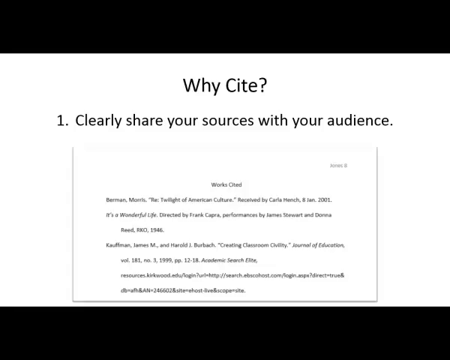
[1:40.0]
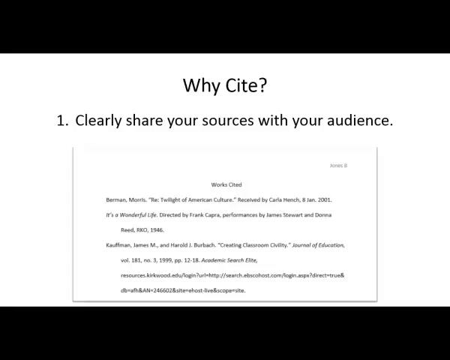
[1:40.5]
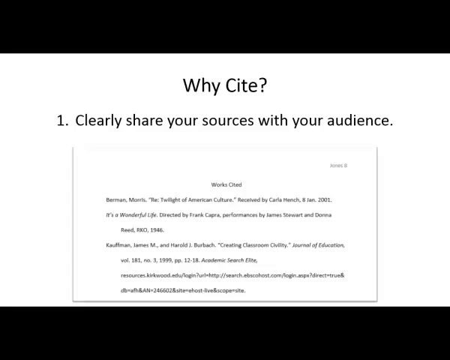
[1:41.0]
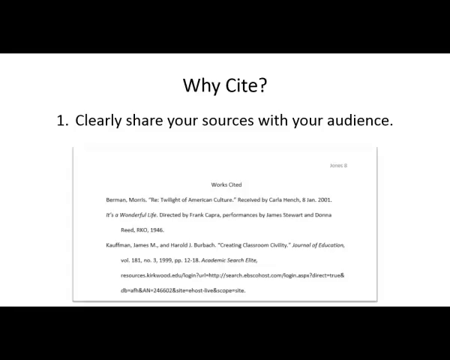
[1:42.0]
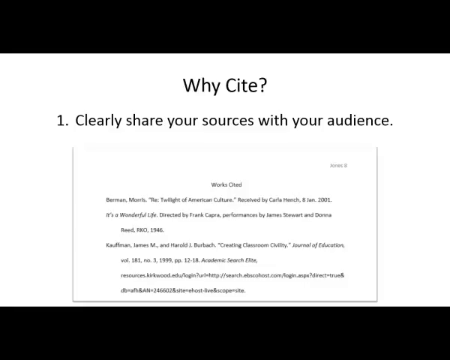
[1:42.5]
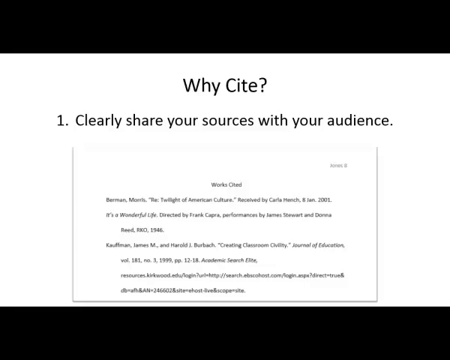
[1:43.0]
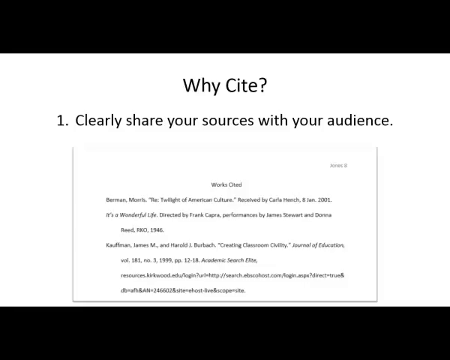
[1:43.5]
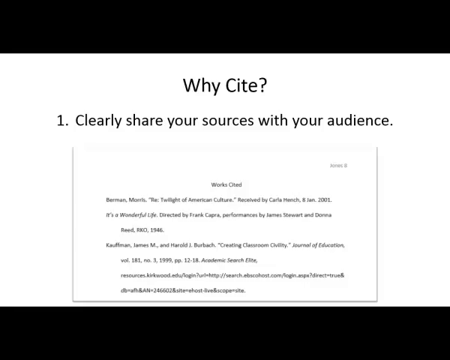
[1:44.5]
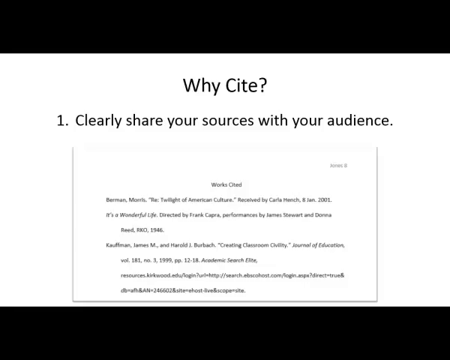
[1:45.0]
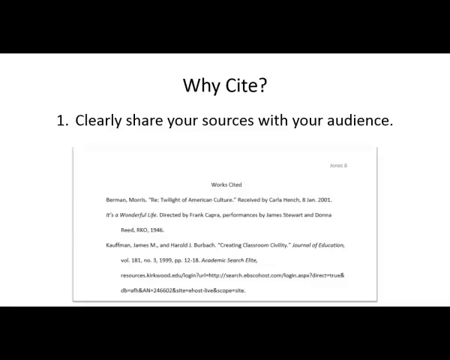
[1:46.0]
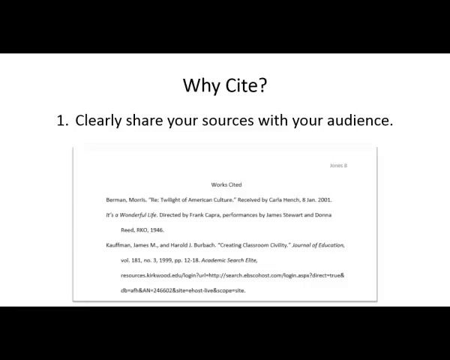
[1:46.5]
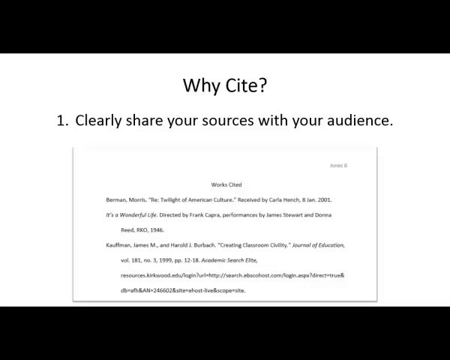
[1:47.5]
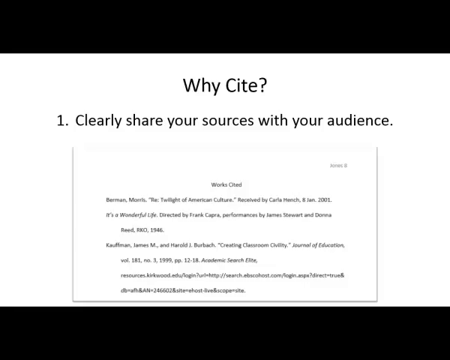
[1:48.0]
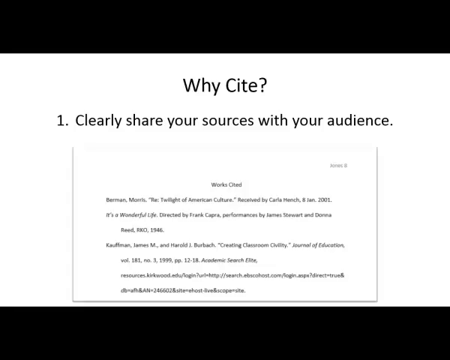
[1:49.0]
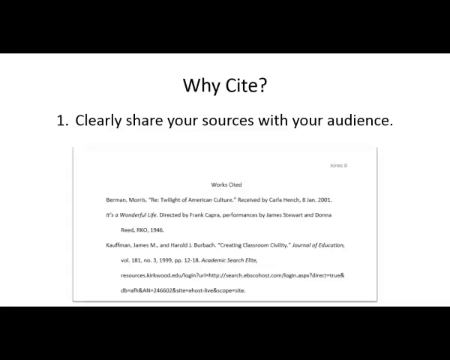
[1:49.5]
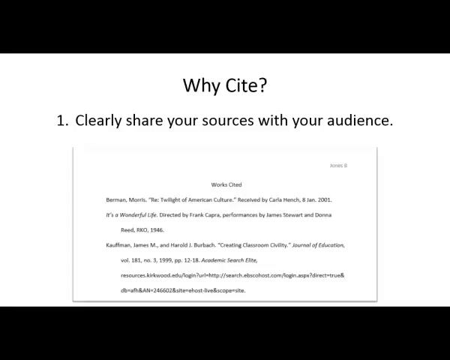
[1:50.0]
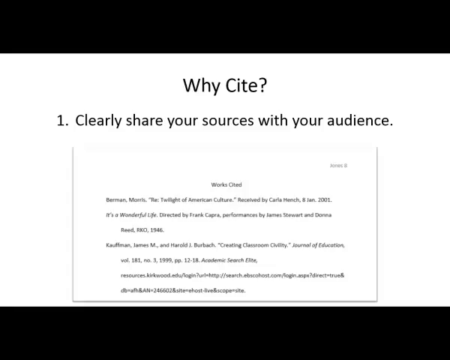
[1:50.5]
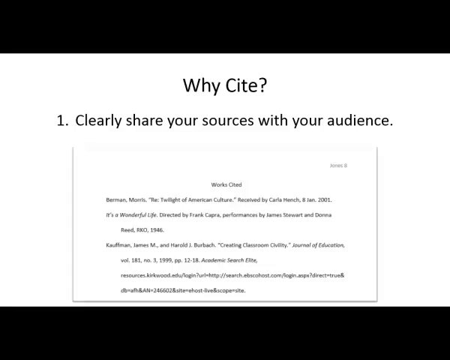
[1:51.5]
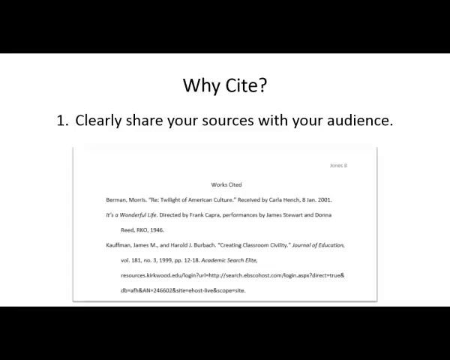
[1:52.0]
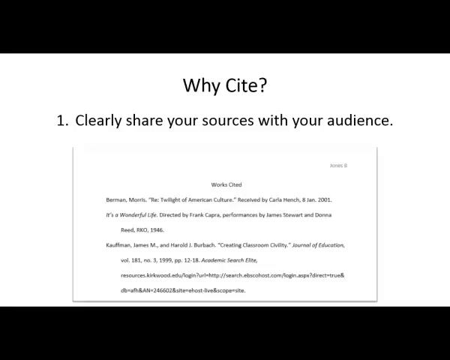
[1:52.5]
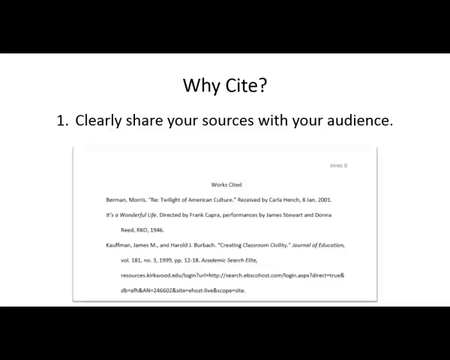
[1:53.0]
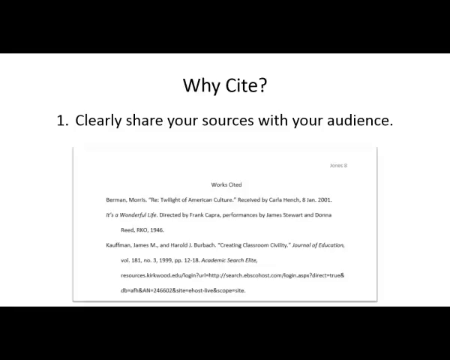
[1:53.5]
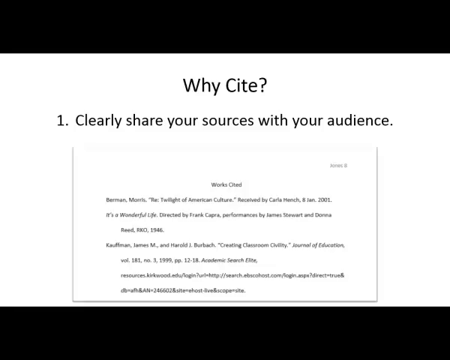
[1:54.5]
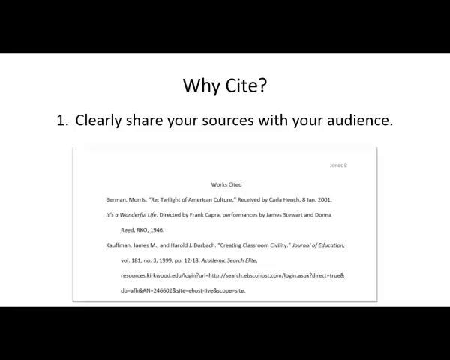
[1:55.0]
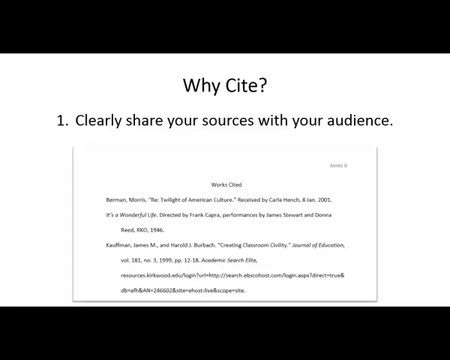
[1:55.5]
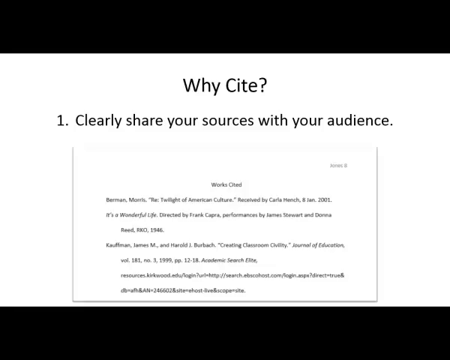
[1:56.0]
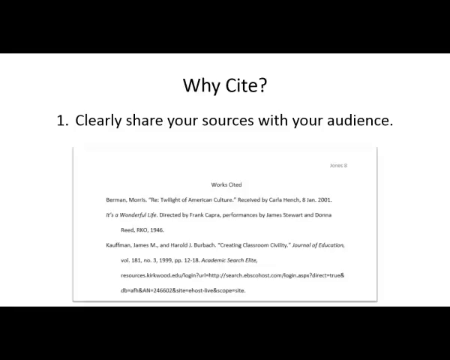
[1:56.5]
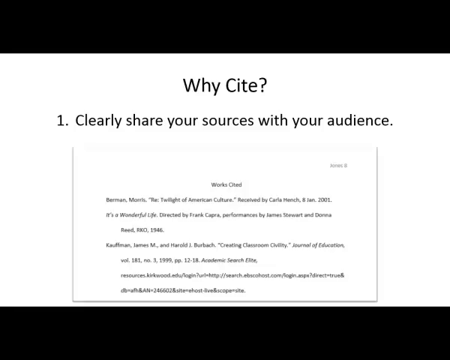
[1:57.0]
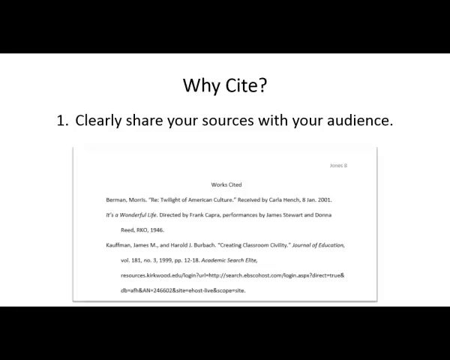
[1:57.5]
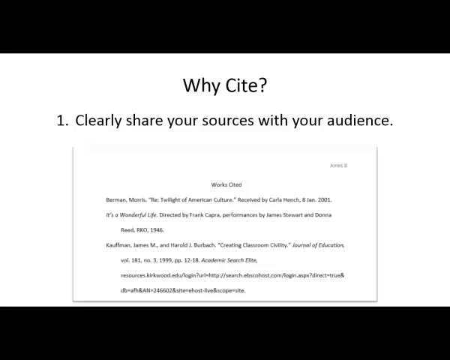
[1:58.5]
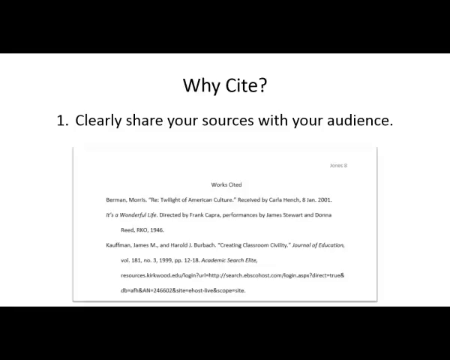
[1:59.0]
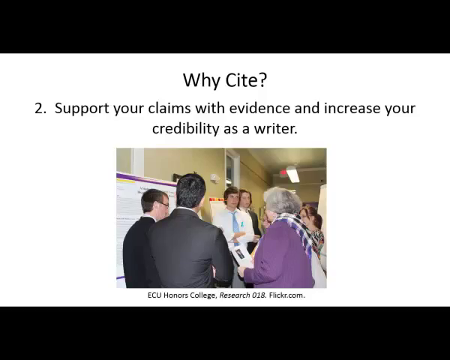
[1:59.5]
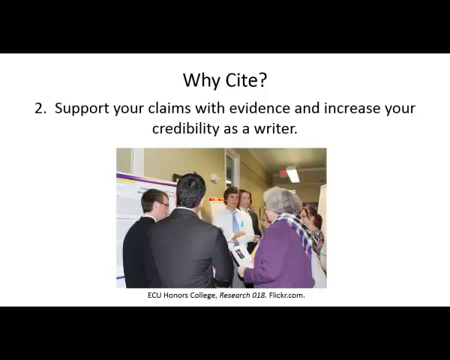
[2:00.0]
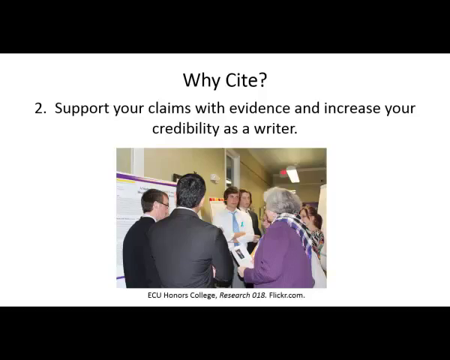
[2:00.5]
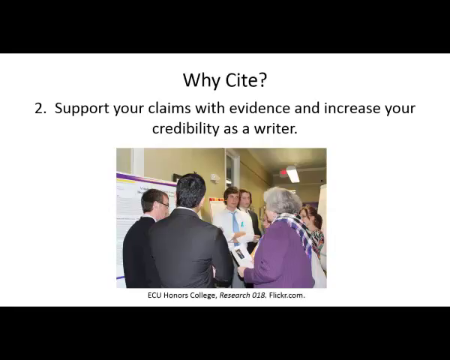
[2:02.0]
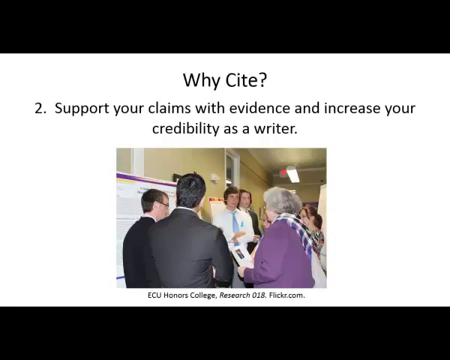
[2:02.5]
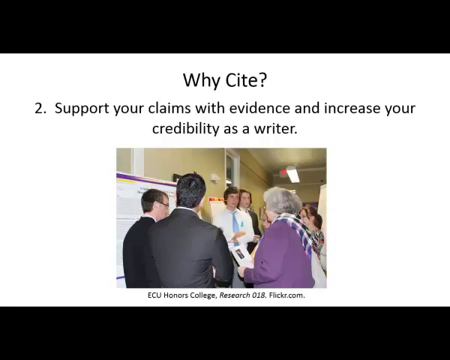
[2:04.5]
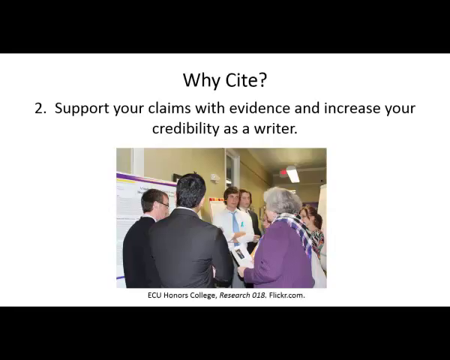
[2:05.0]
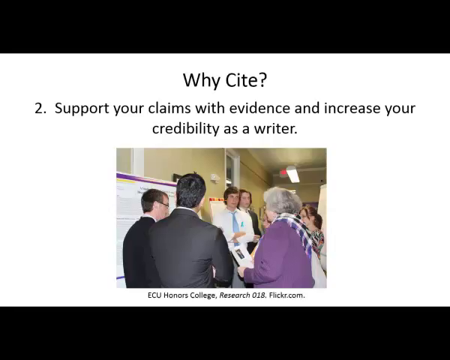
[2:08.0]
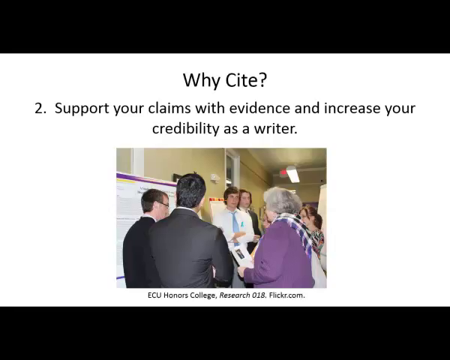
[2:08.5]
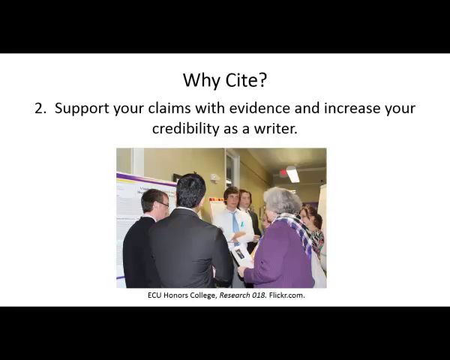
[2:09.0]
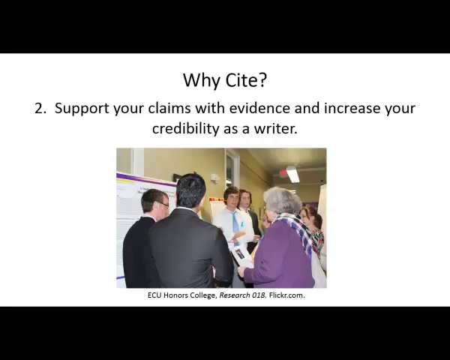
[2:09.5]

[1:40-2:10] The slide asking "why cite" with "one, clearly share your sources with your audience" continues, along with the snippet of what looks to be a Word document page headed "works cited," which stays very blurry and hard to read for most of the shot. Then another slide says "why cite" with point two: "to support your claims with evidence and increase your credibility as a writer." It has a picture of people at some kind of presentation room. They look to be middle-aged people standing in front of a variety of presentation boards, and some look to be students. An older group of people looks at these students: two men in suits with their backs to the camera, and an old woman with gray hair in a purple shirt with a blue plaid scarf over her shoulder, holding papers and looking at the young man. Underneath the picture it reads "ECU Honors College Research 018. flickr.com."